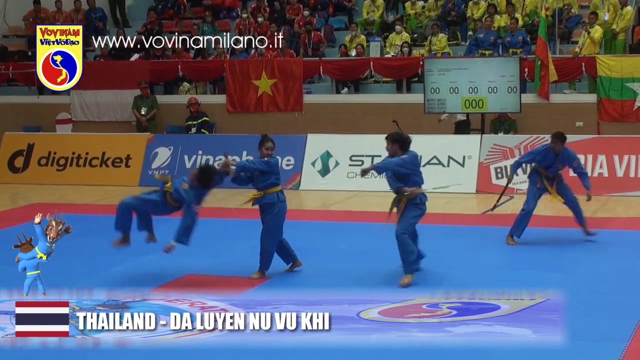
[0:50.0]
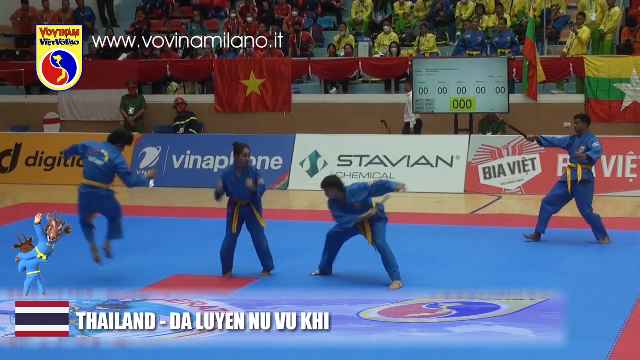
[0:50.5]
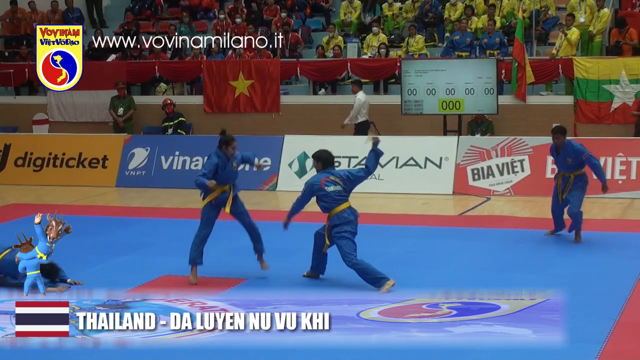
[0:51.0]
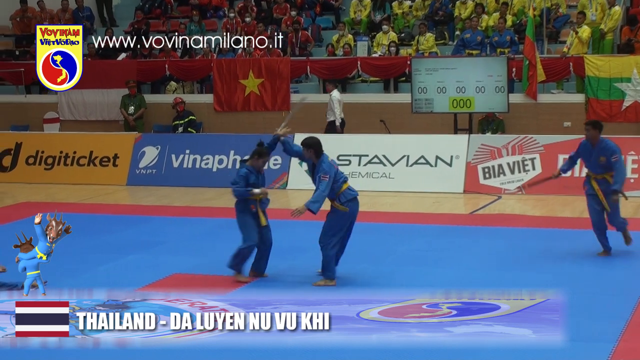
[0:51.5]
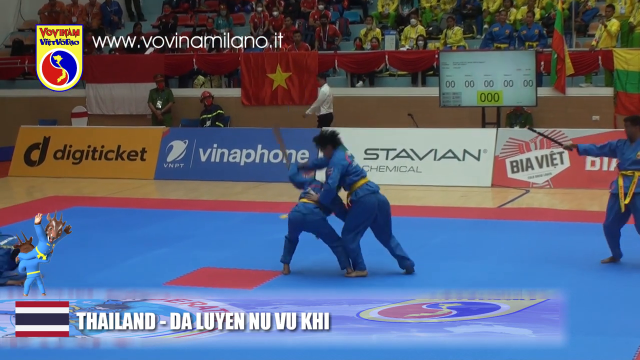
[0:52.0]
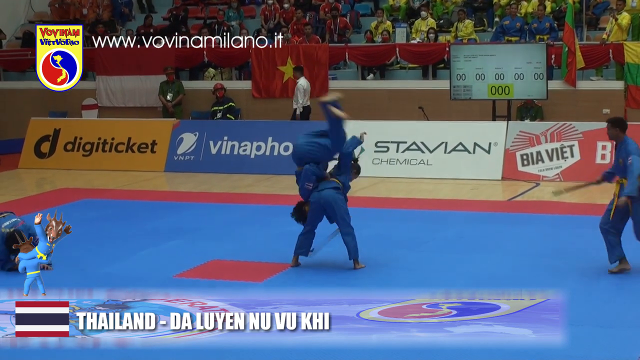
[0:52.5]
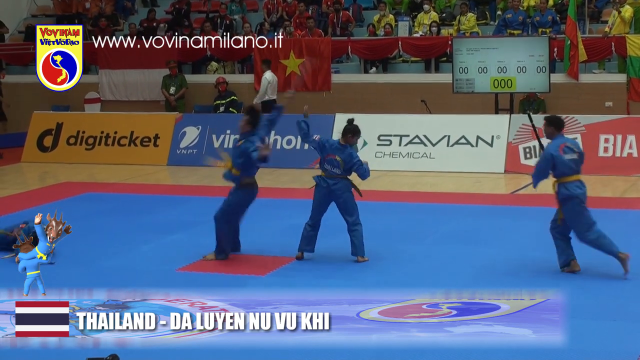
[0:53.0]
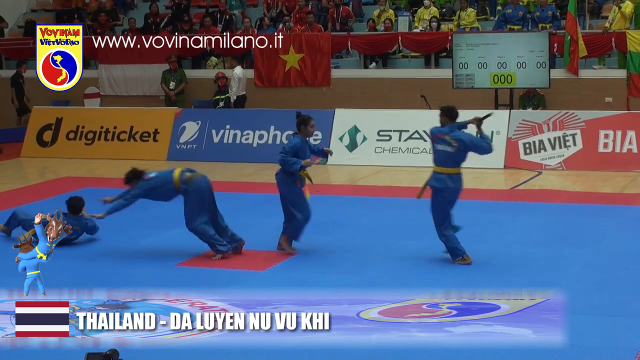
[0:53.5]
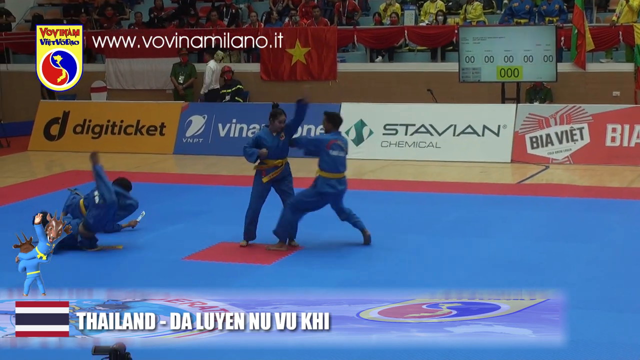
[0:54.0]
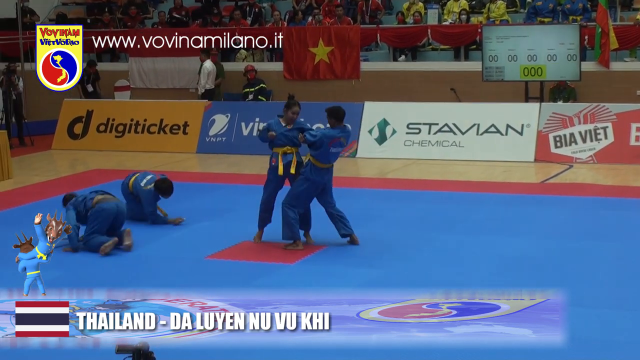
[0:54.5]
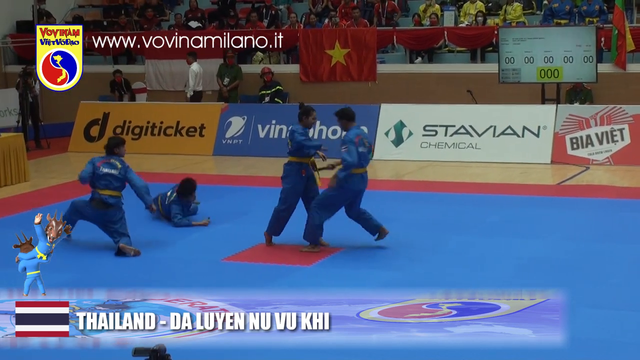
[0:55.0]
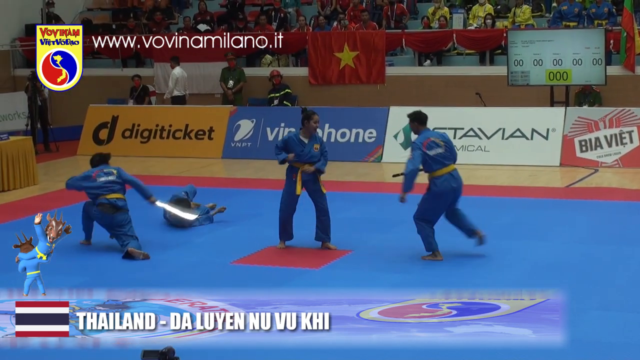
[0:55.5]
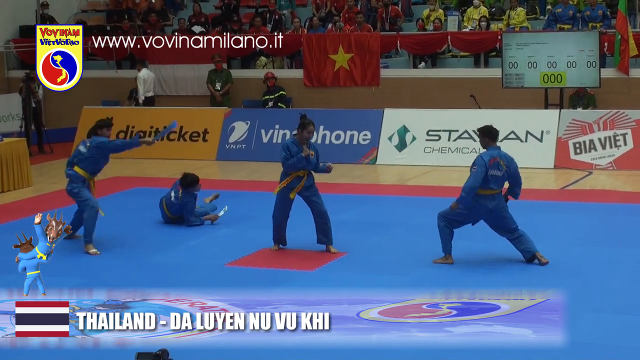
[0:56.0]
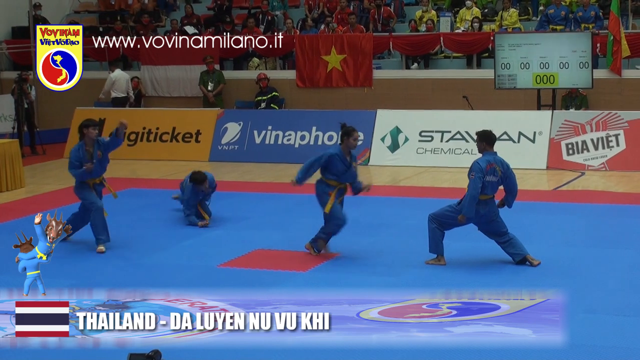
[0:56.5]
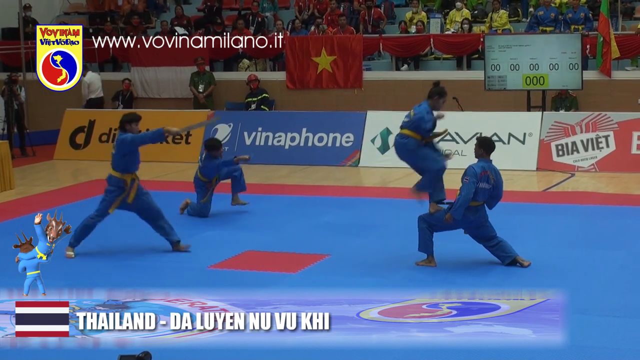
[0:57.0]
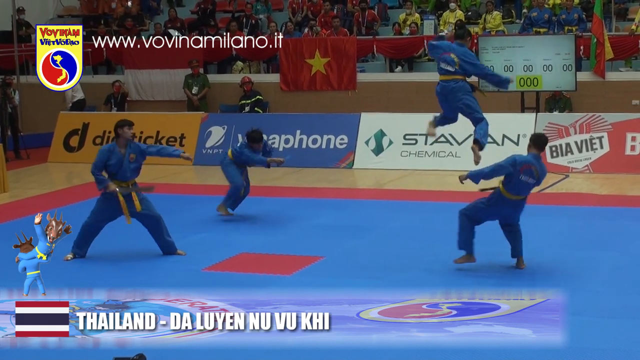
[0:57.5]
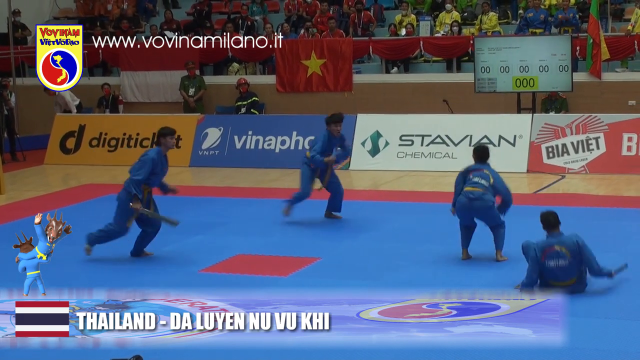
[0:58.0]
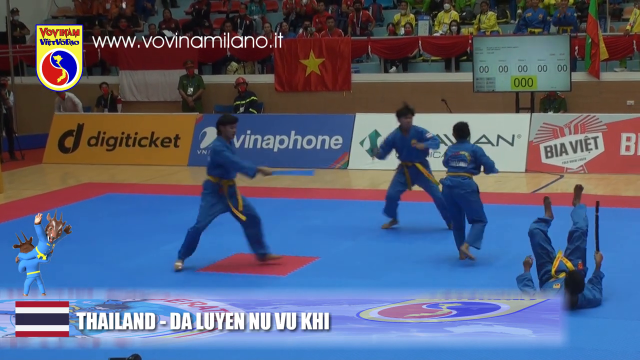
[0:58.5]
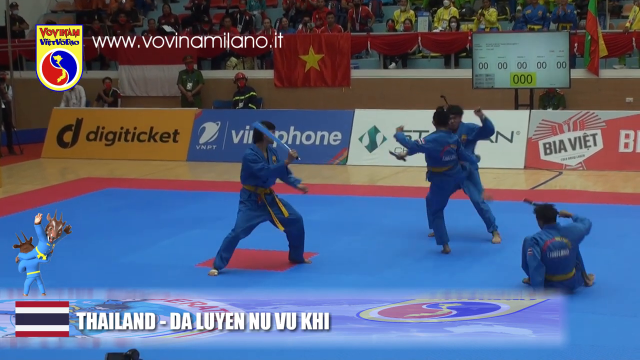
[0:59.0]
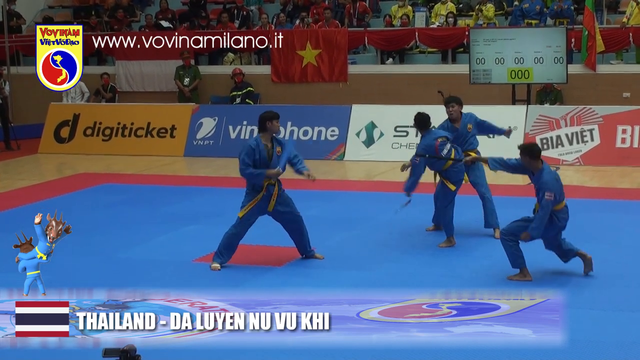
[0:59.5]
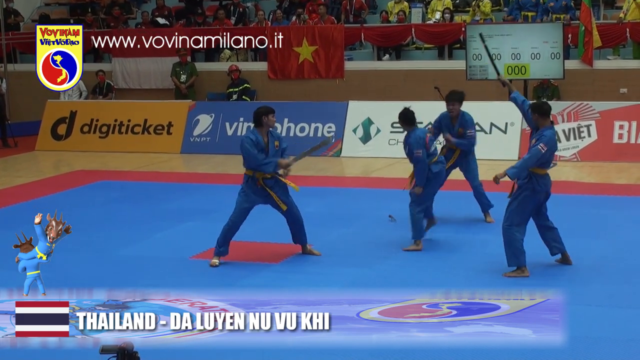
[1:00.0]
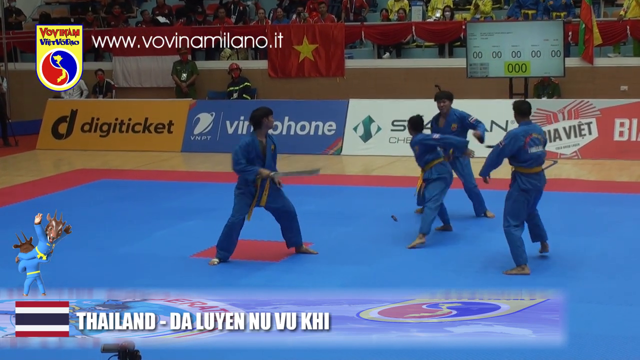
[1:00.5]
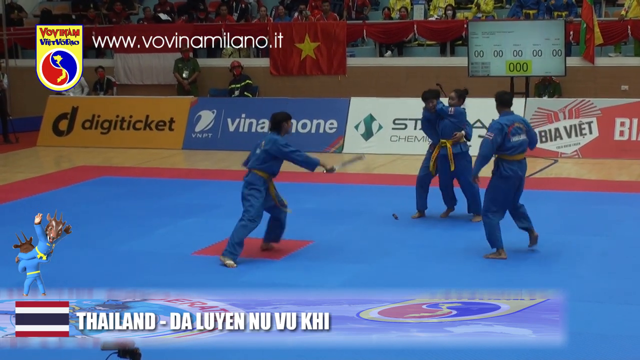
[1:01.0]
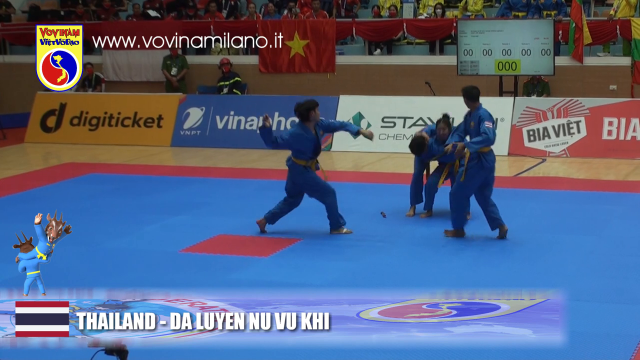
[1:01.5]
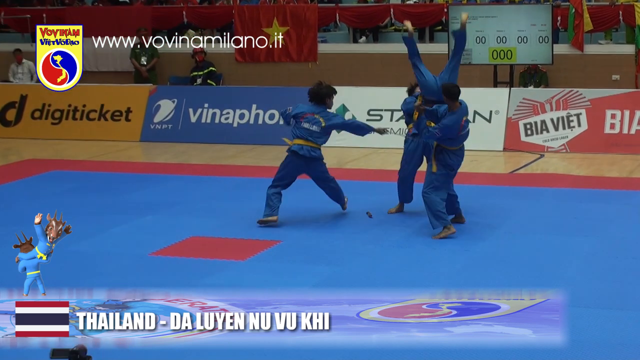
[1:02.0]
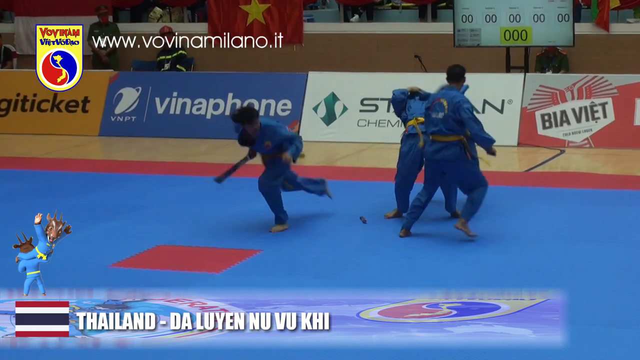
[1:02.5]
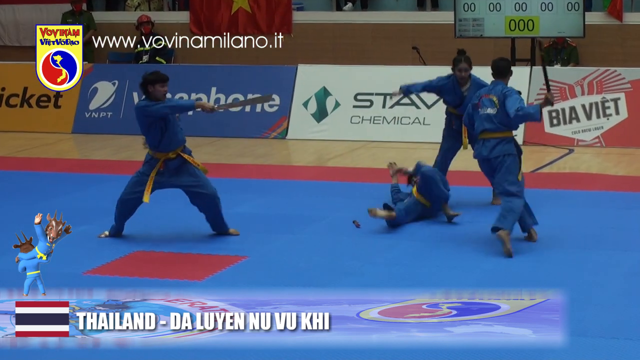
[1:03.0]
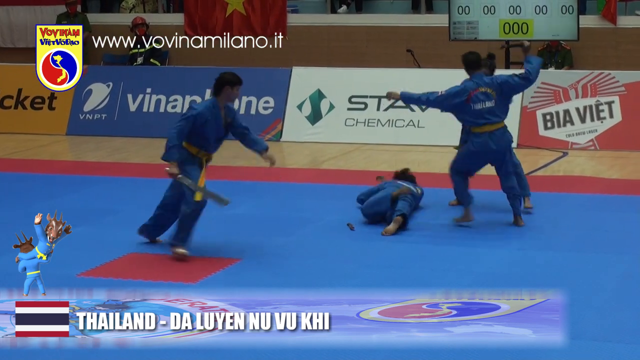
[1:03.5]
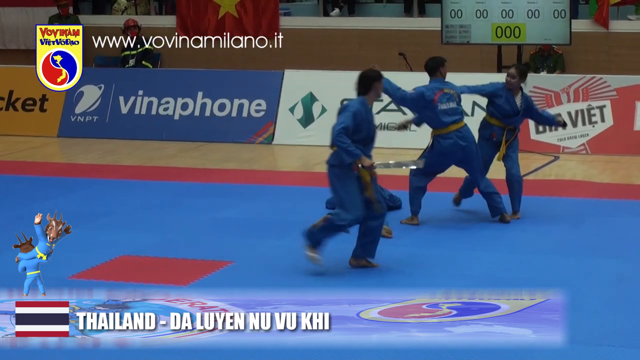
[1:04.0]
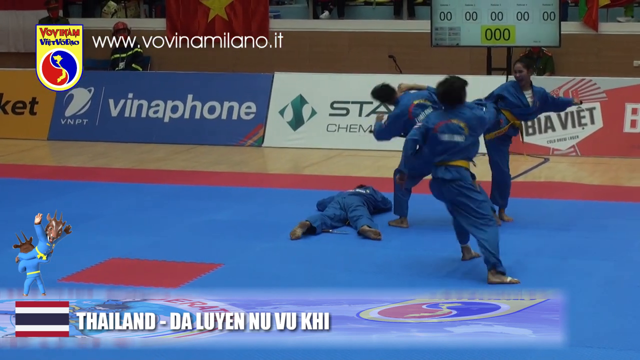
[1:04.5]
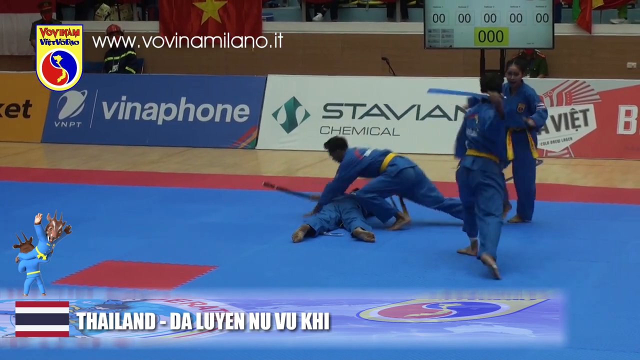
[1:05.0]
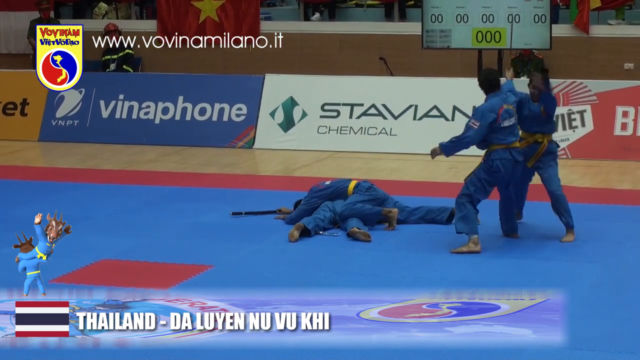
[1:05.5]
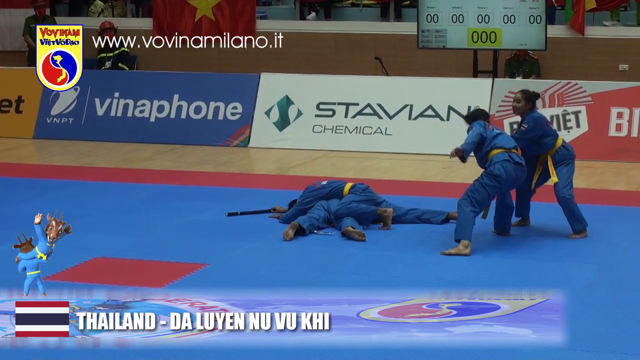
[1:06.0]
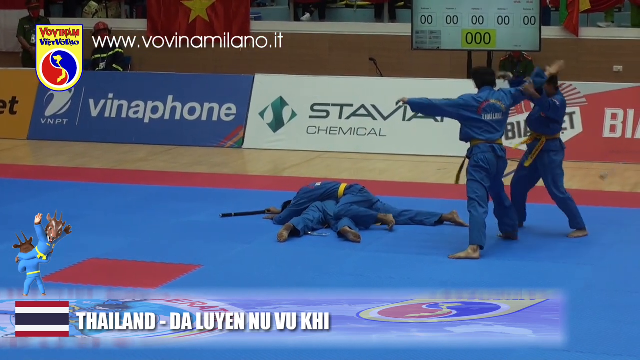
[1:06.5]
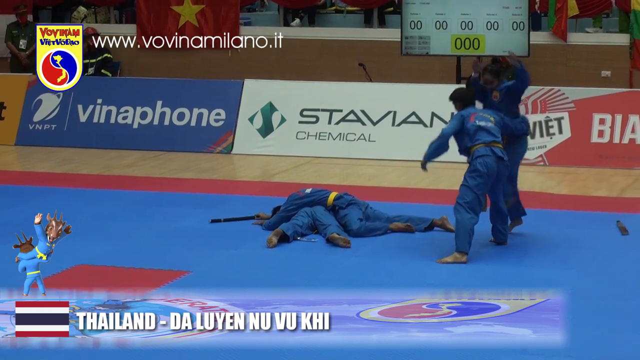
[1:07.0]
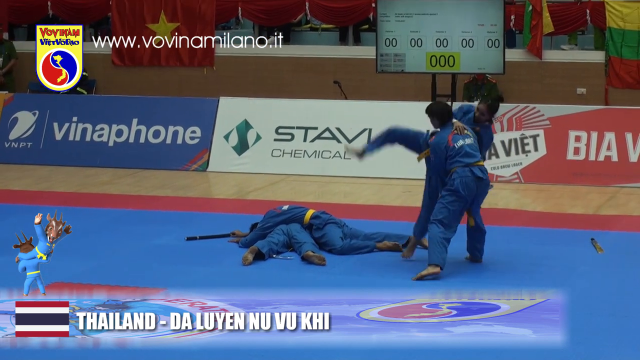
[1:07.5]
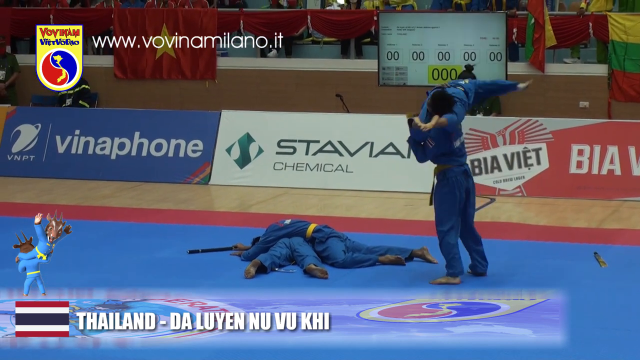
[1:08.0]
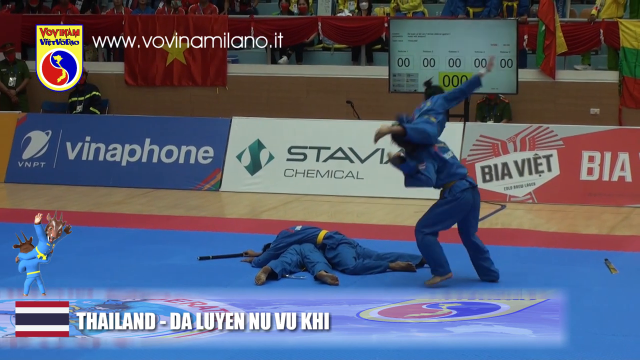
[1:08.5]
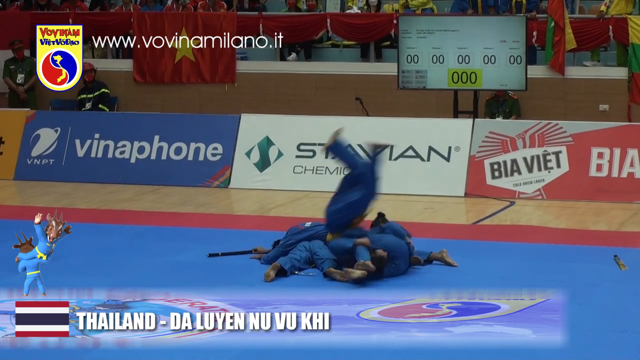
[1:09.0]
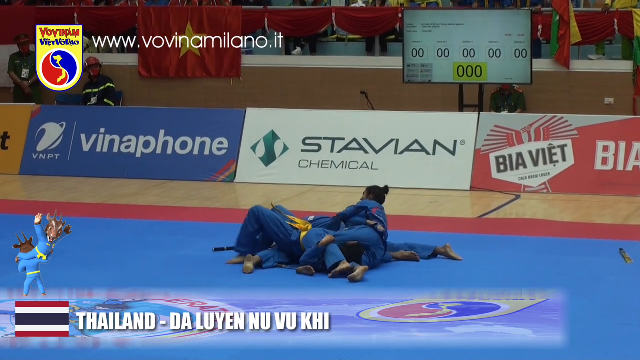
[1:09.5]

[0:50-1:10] In a coordinated floor exercise during a competition held in Hanoi, a team of three men and one woman from Thailand shows martial arts skills. They wear blue jumpsuits with yellow sashes reminiscent of karate apparel. The three men hold and wield swords and sabers and try to attack the female member of the team. She puts them in headlocks and resists their attacks with martial arts maneuvers, displacing their weapons, then puts one of the would-be assailants in a leg headlock and flips them onto the ground. A scoreboard on an LCD display is behind the advertising boards on the perimeter of the competition space. Flags and red banners hang on the balustrade in front of the spectators, many of whom wear bright colored clothing and are seated together by clothing color, red on the left and yellow on the right.